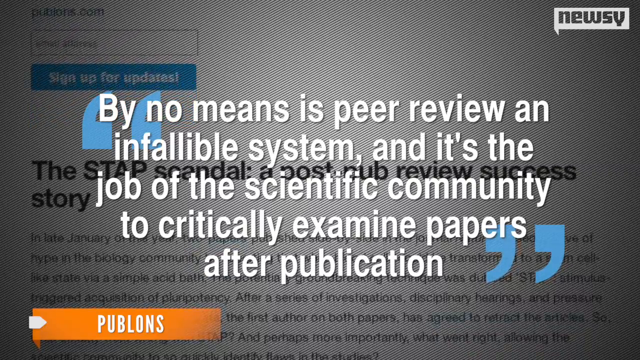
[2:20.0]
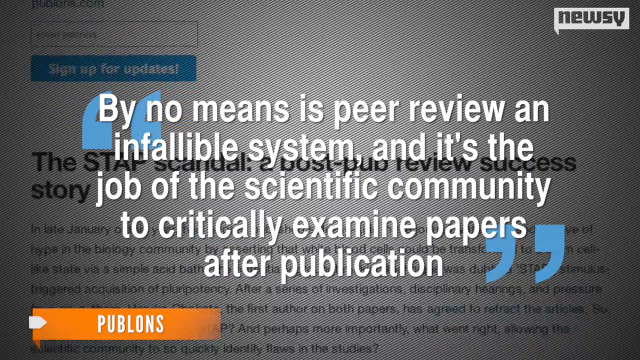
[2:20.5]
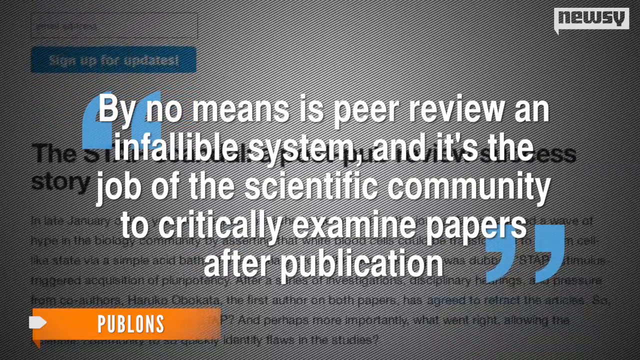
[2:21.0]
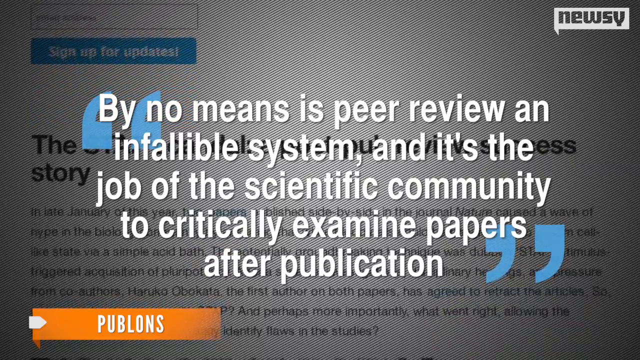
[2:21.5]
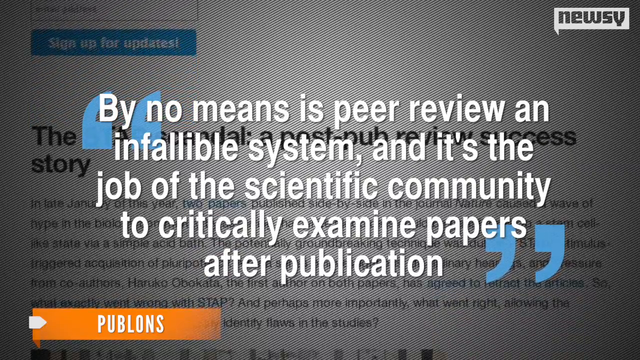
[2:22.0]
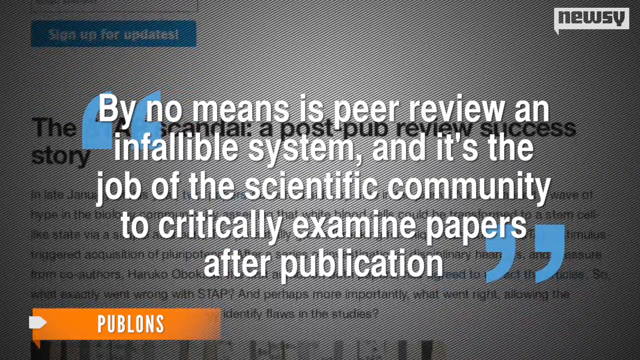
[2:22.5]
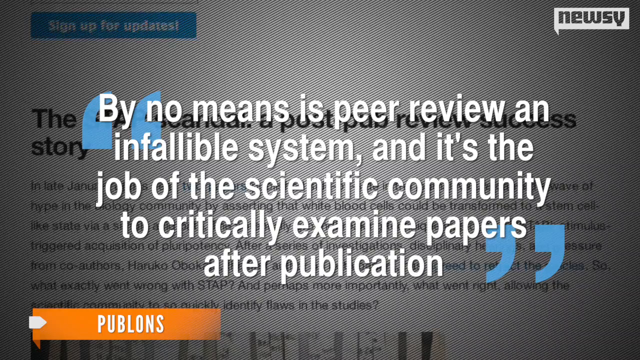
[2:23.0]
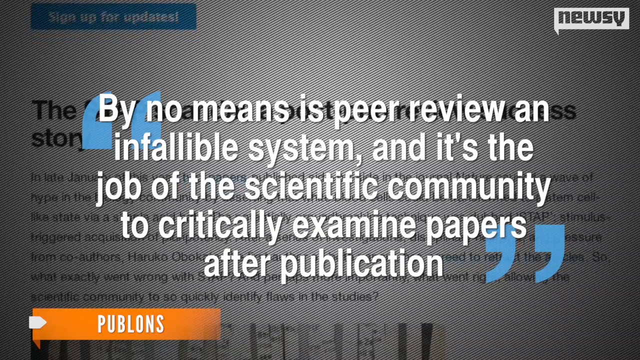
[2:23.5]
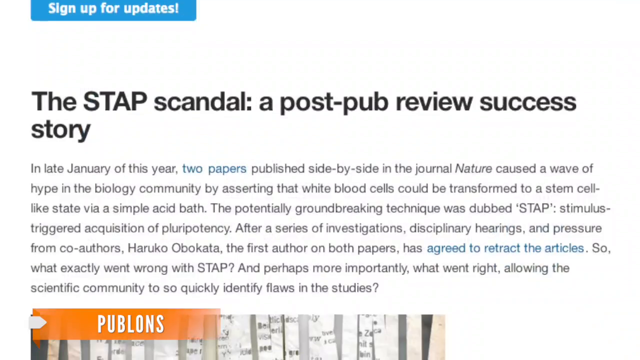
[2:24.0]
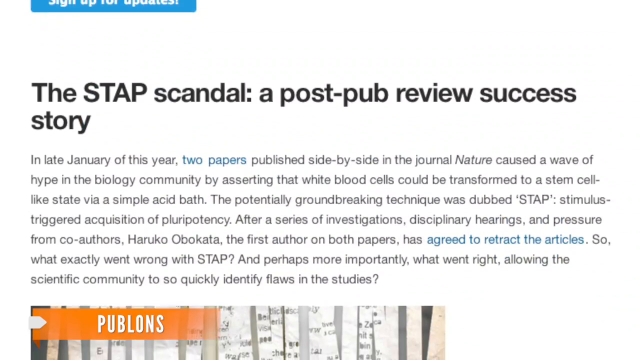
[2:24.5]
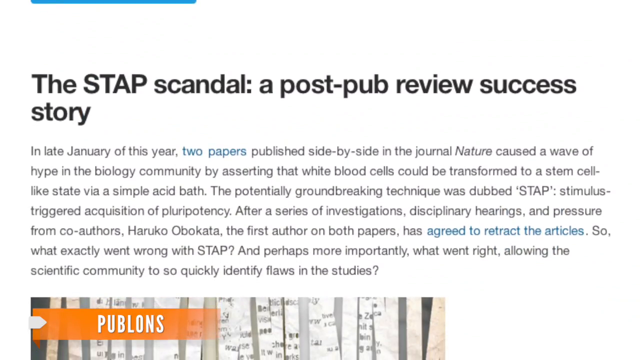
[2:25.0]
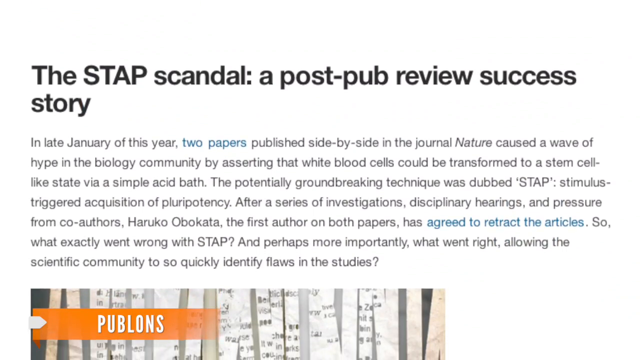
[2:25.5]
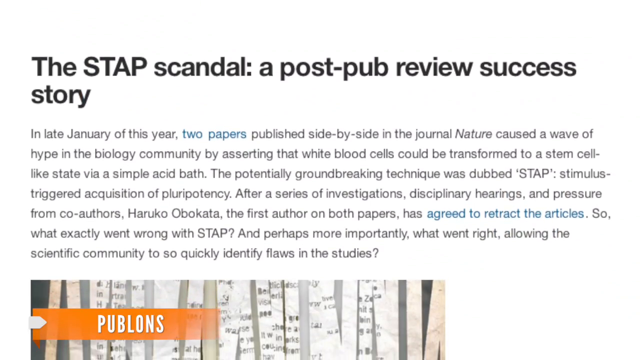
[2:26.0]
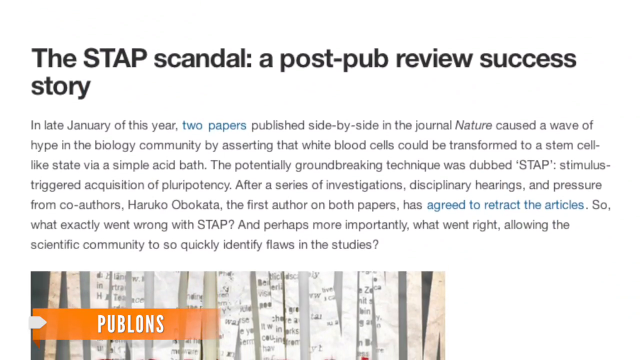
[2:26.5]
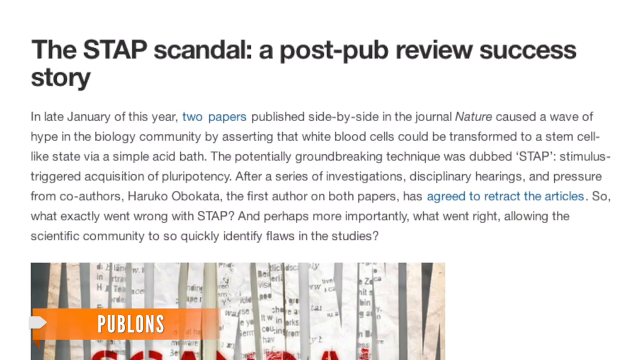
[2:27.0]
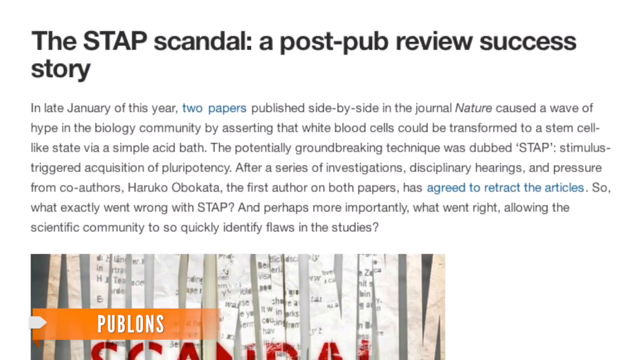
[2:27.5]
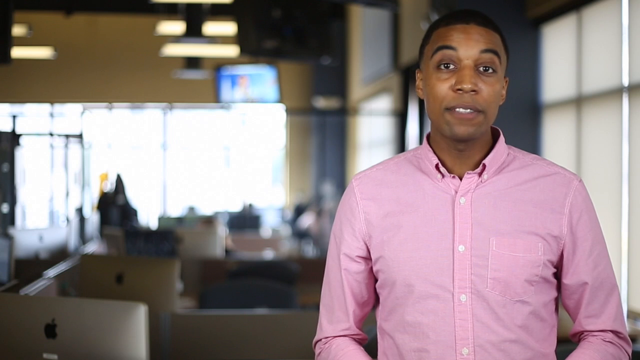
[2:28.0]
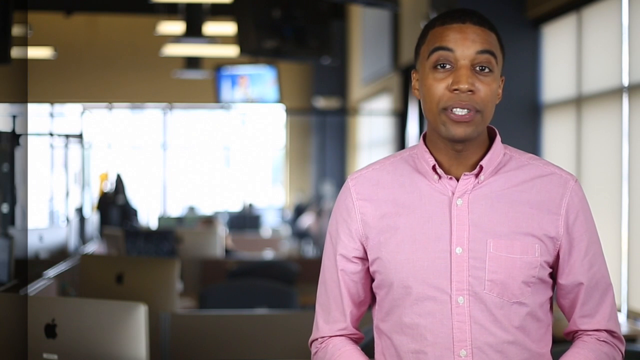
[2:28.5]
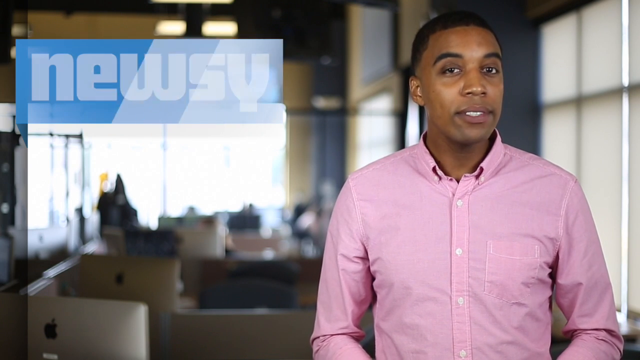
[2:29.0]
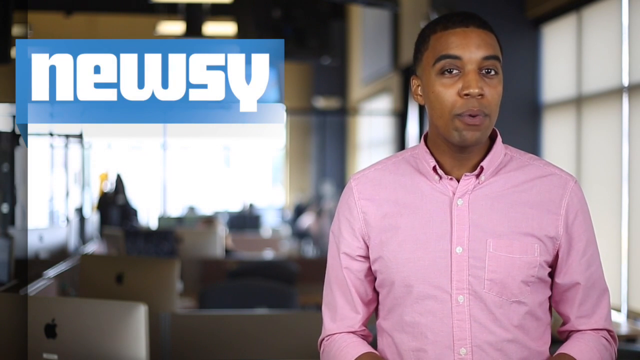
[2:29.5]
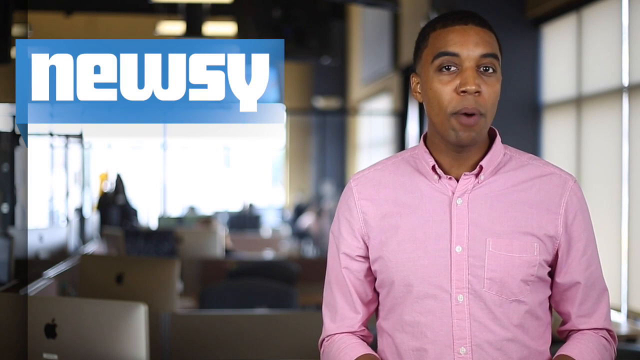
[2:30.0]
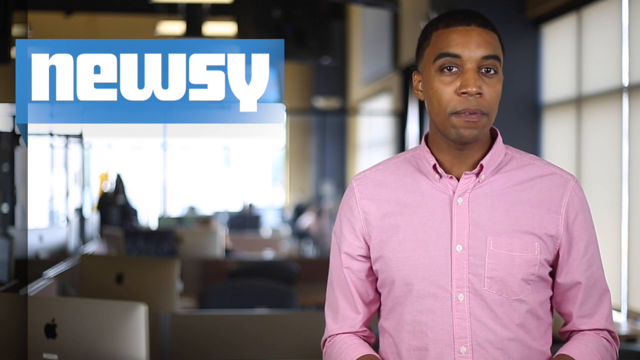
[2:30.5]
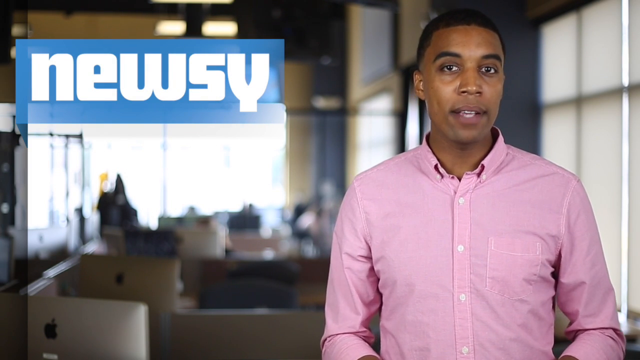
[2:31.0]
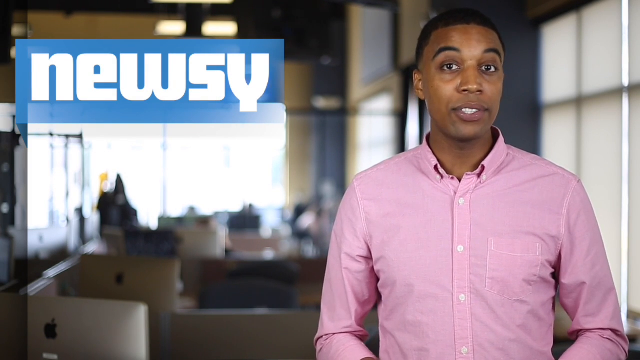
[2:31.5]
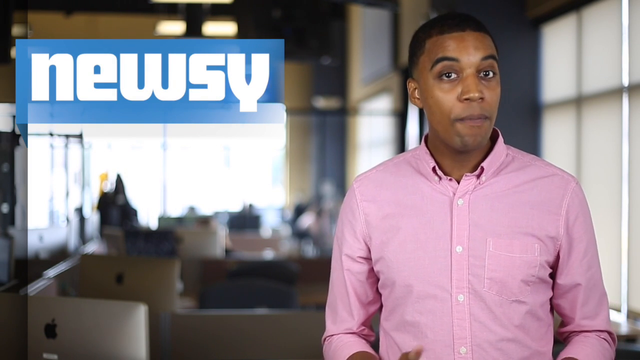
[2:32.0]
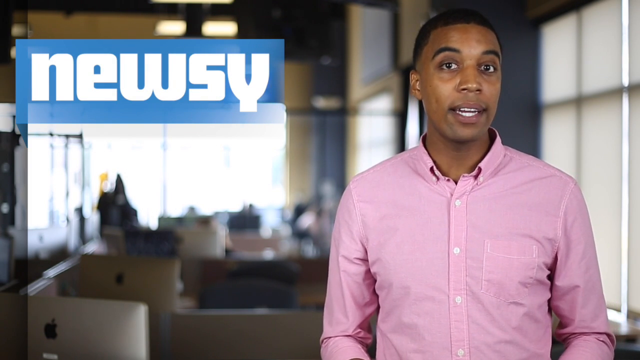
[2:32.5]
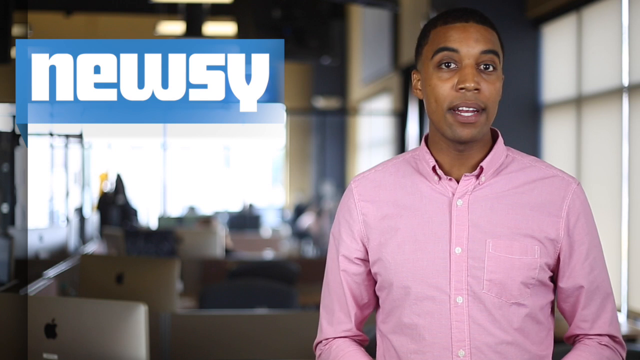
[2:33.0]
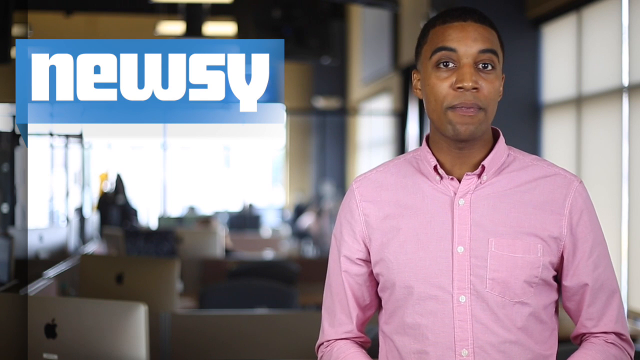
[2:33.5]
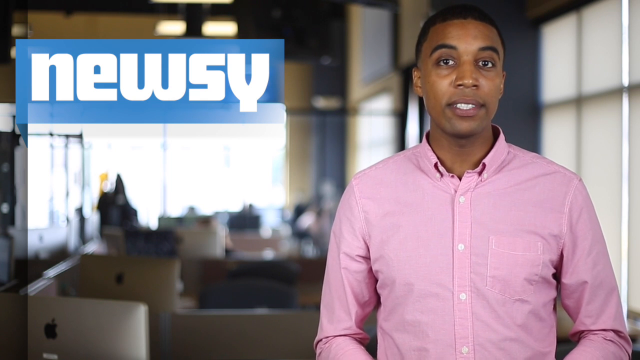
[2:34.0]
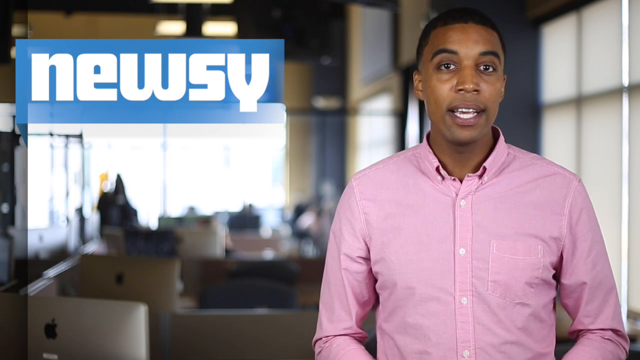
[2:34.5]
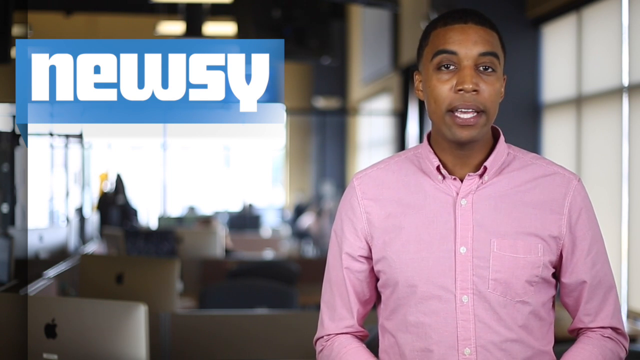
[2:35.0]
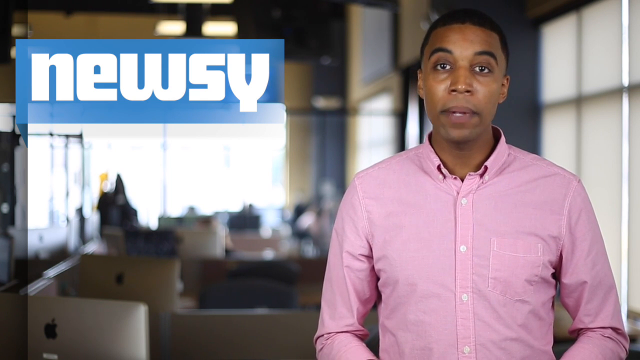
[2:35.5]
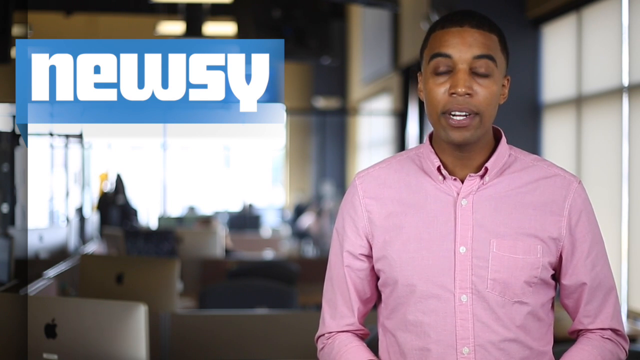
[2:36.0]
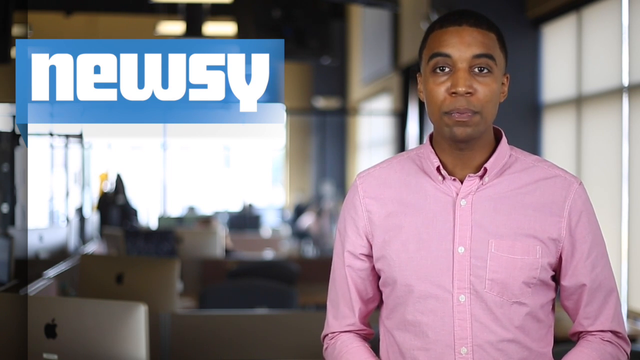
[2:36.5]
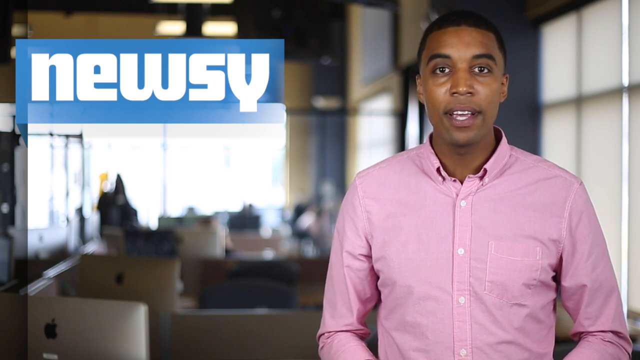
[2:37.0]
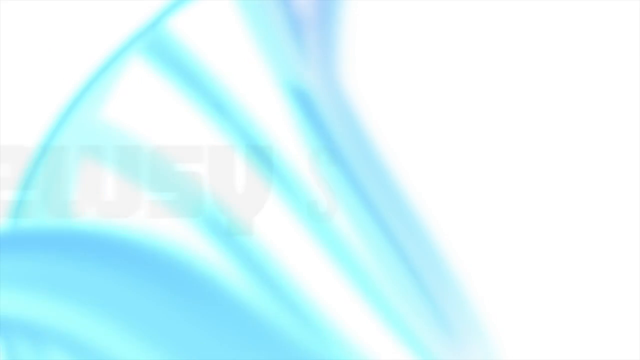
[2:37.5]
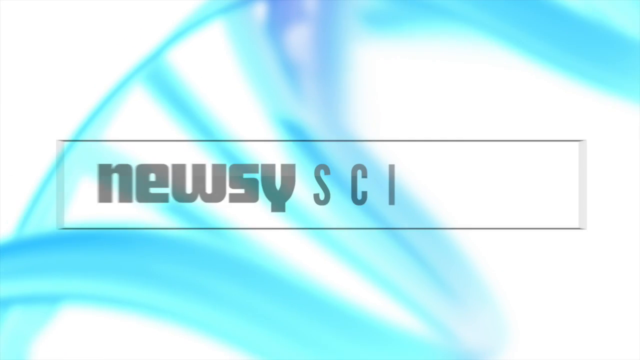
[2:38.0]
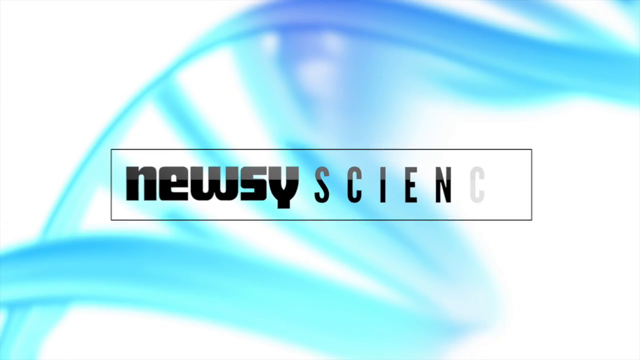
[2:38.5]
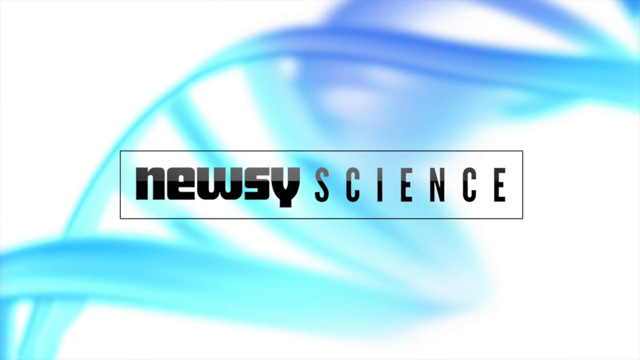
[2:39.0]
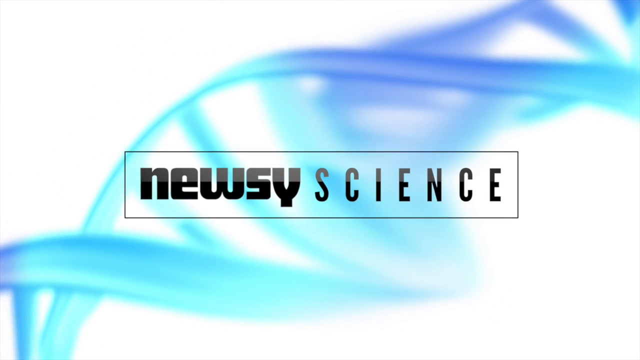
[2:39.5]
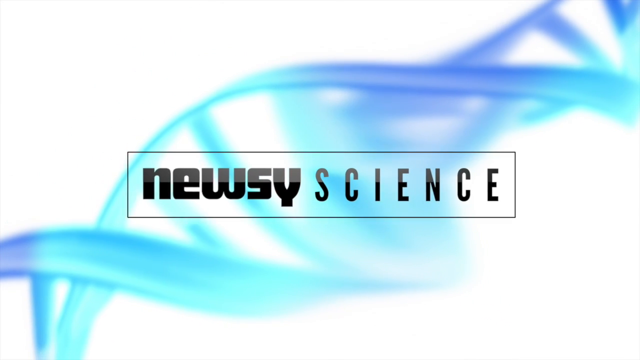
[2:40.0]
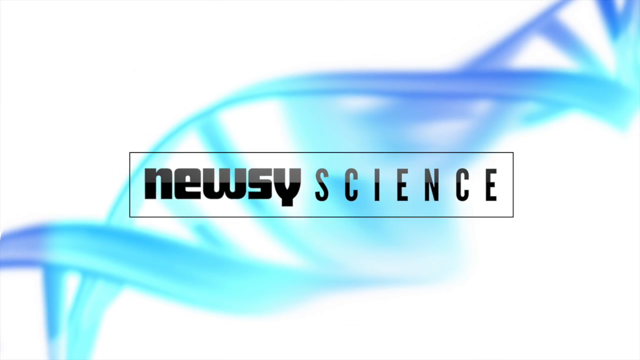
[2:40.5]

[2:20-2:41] The final part, by Newsy, shows the article "the STAP scandal a post-pub review success story," which reads "by no means is peer review an infallible system and it's the job of the scientific community to critically examine papers after publication" and continues about two papers "published side by side in the journal Nature" that "caused a wave of hype in the biology community," with text about white blood cells being transformed to a stem cell like state.